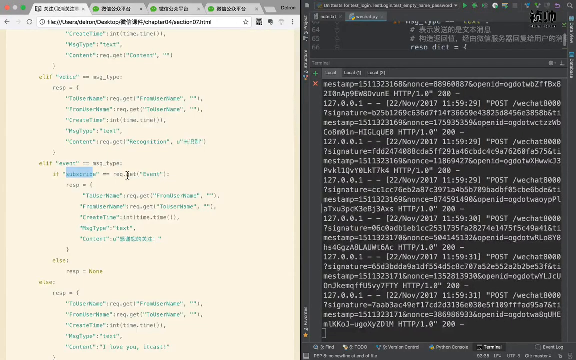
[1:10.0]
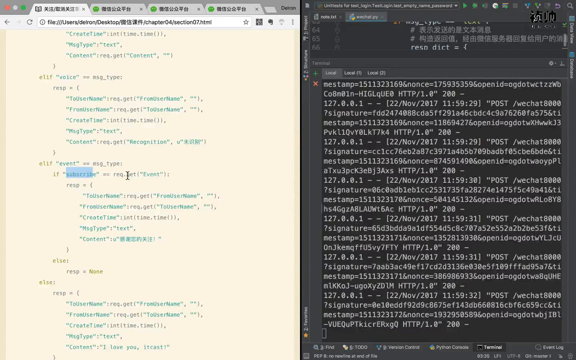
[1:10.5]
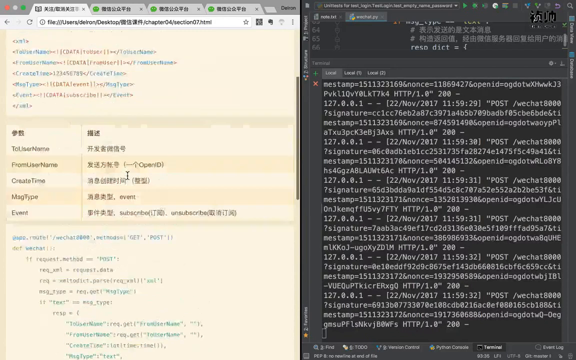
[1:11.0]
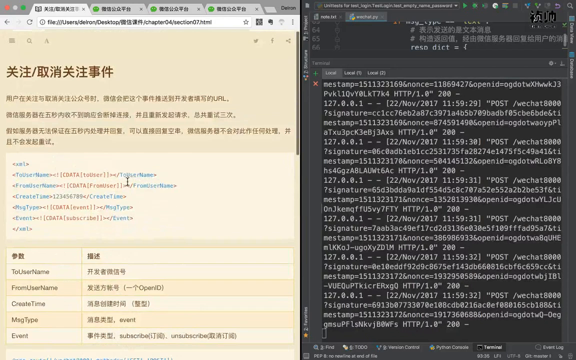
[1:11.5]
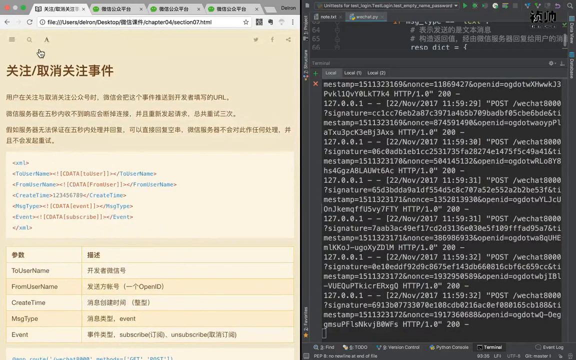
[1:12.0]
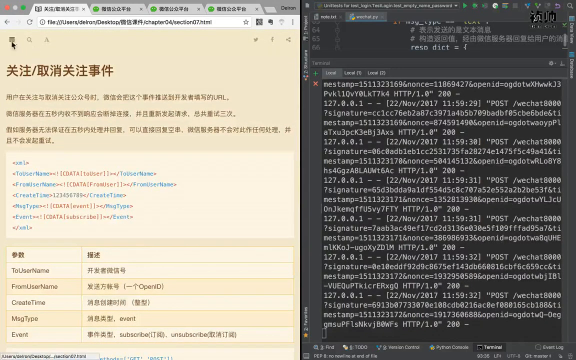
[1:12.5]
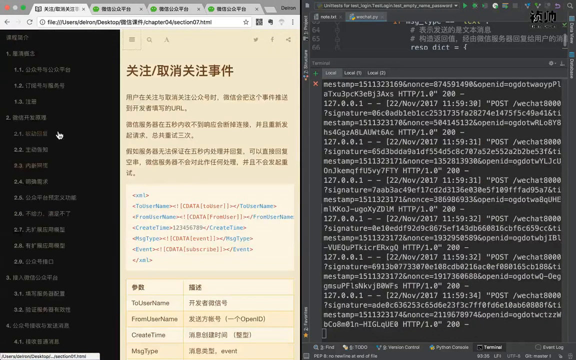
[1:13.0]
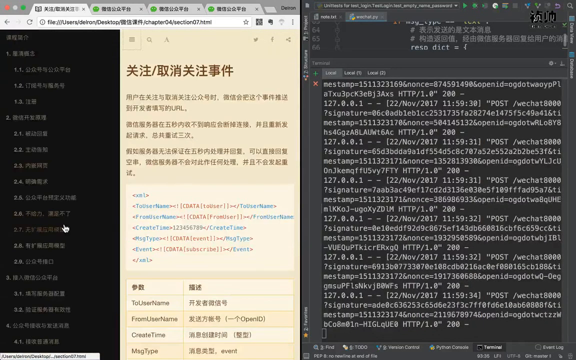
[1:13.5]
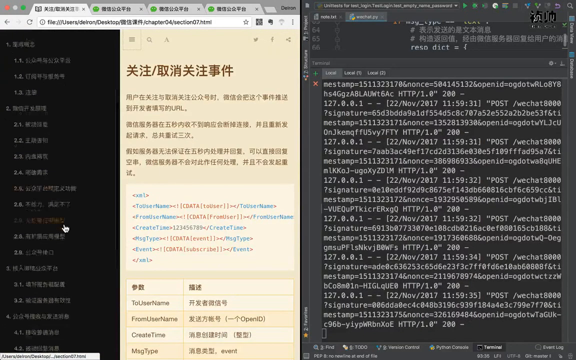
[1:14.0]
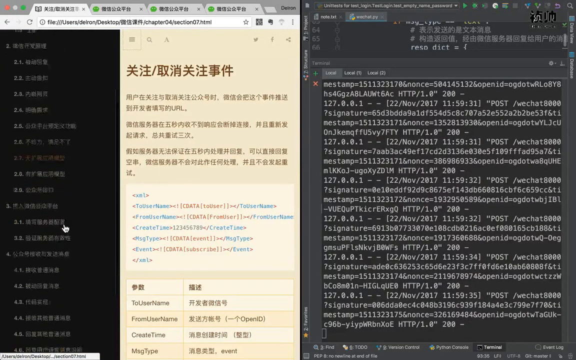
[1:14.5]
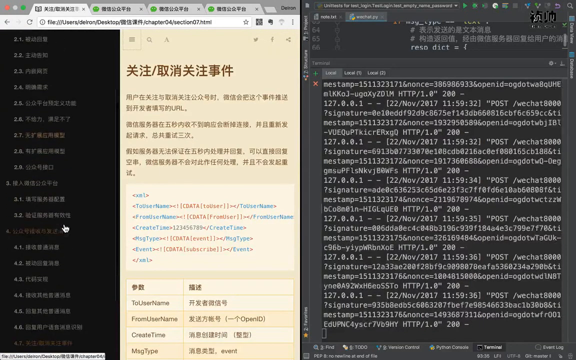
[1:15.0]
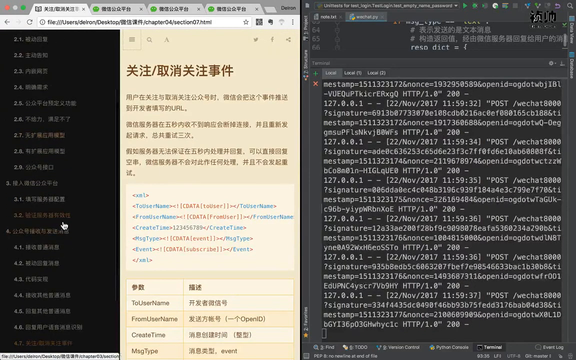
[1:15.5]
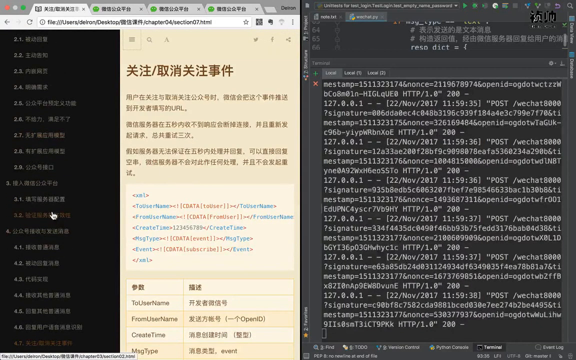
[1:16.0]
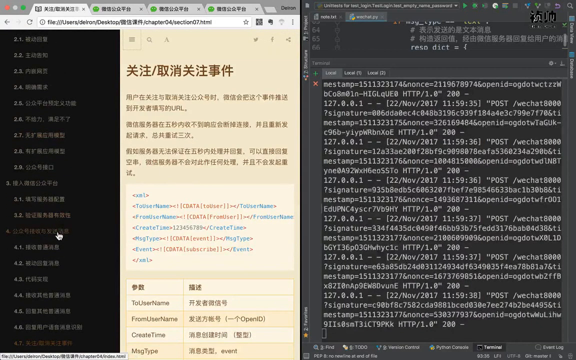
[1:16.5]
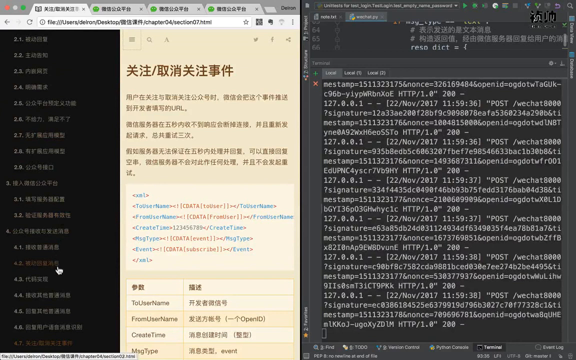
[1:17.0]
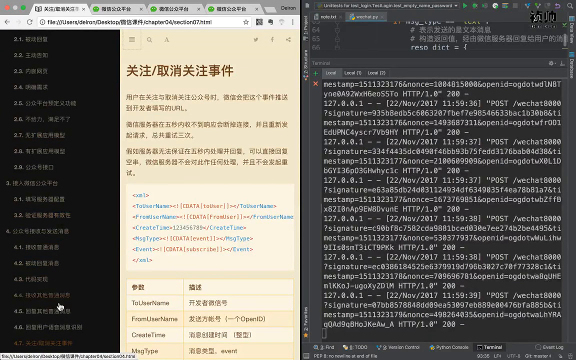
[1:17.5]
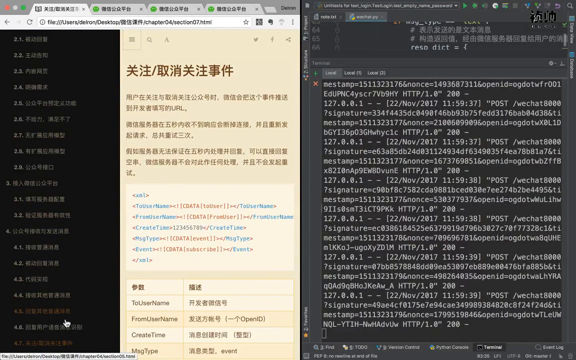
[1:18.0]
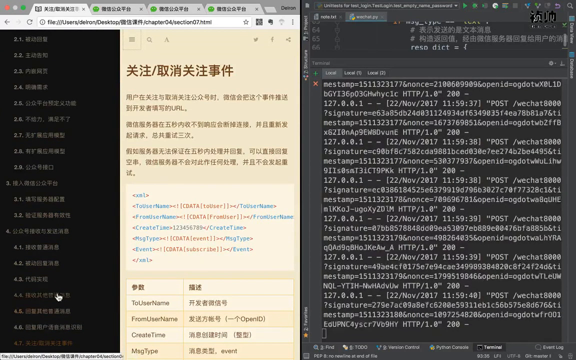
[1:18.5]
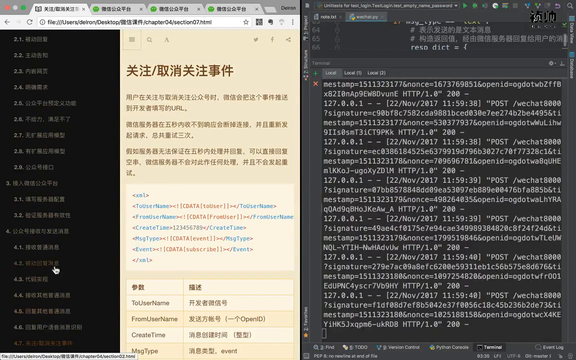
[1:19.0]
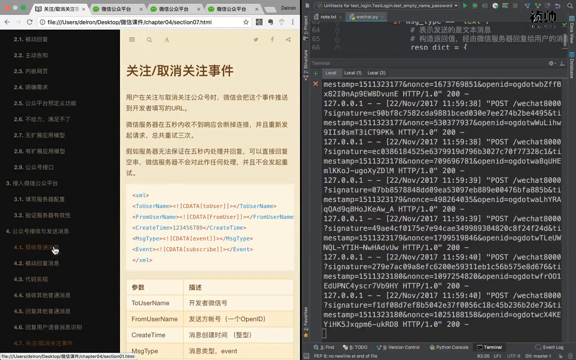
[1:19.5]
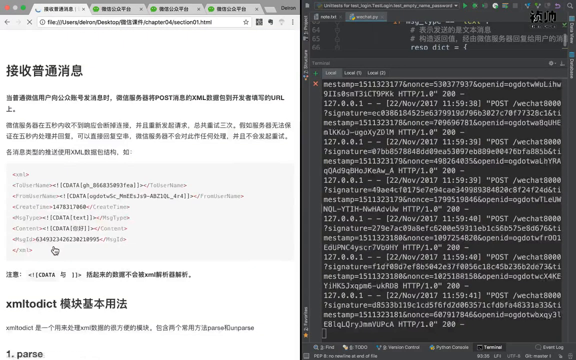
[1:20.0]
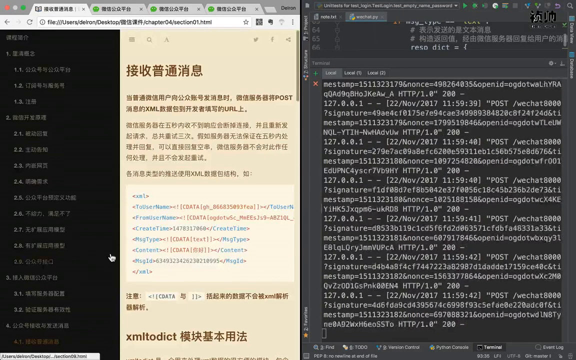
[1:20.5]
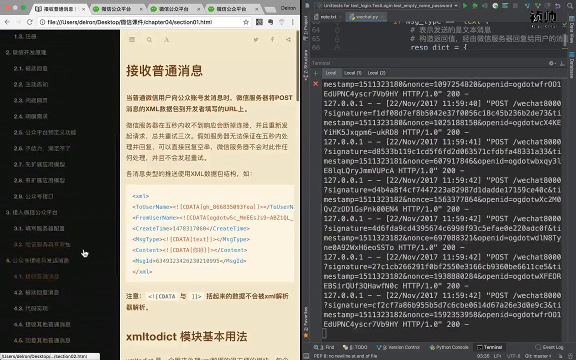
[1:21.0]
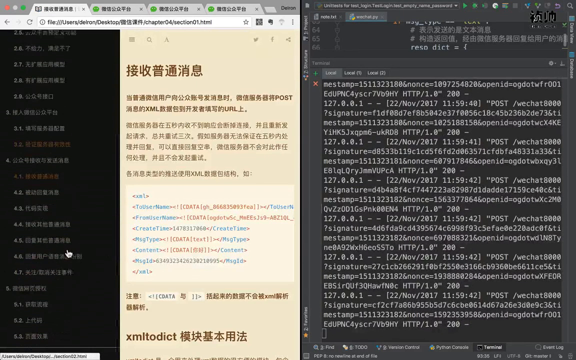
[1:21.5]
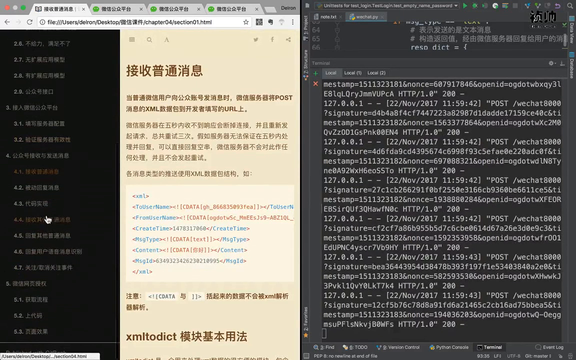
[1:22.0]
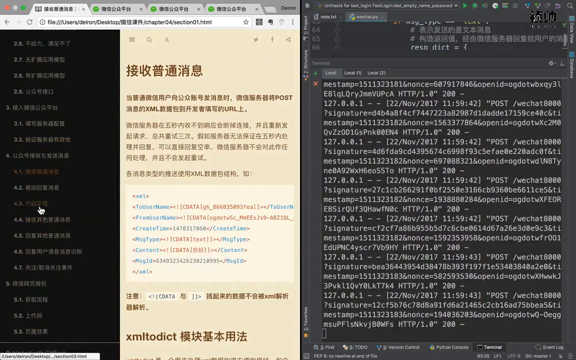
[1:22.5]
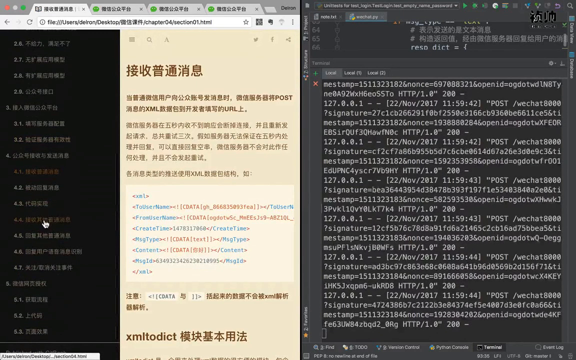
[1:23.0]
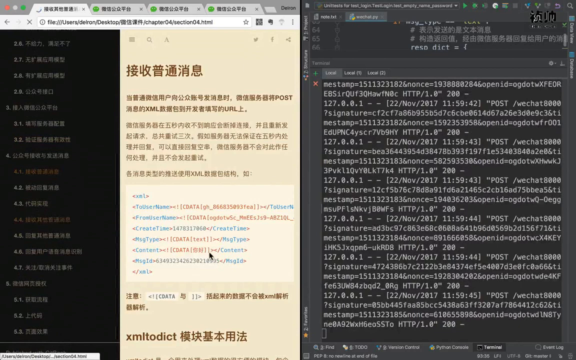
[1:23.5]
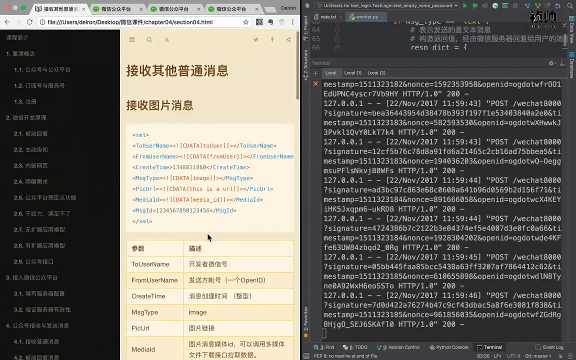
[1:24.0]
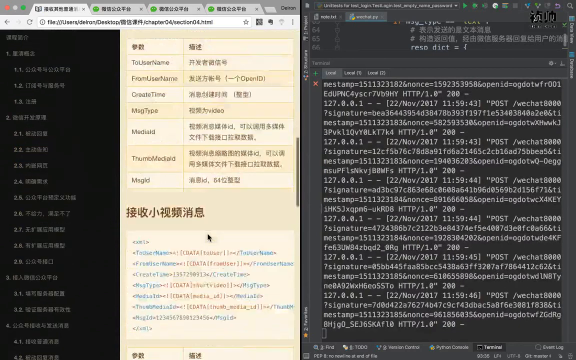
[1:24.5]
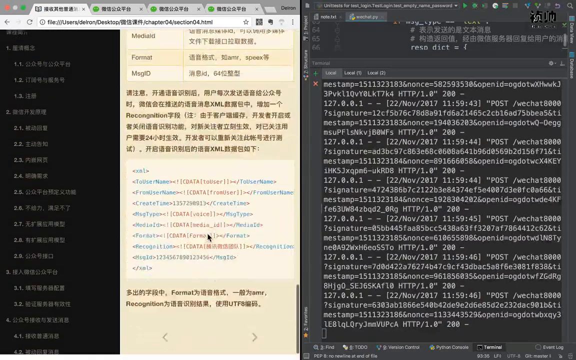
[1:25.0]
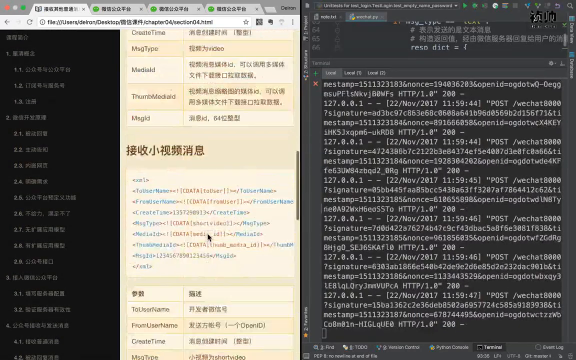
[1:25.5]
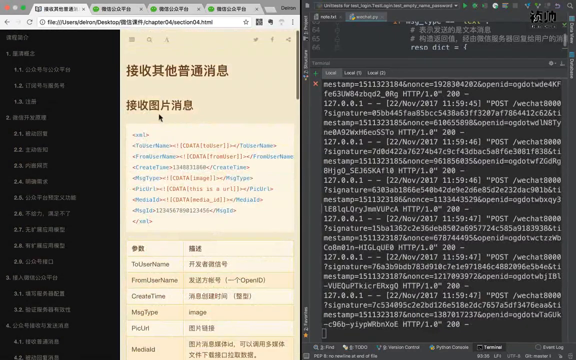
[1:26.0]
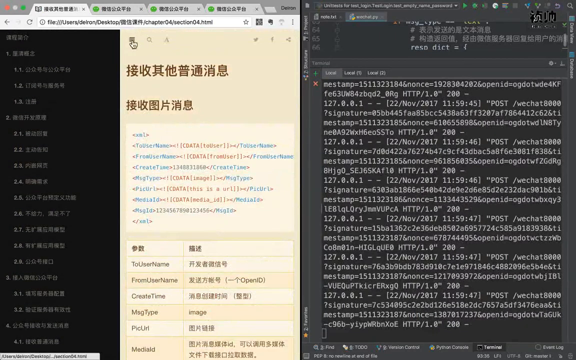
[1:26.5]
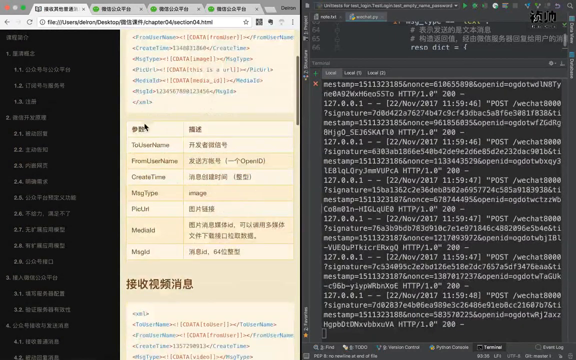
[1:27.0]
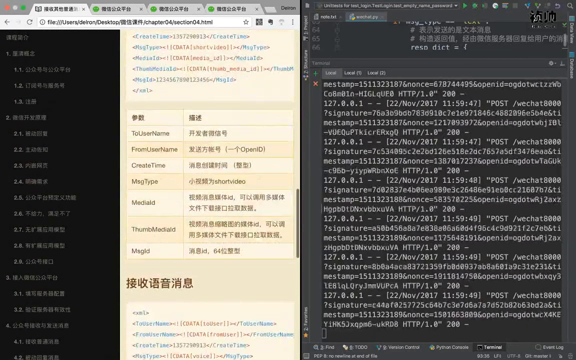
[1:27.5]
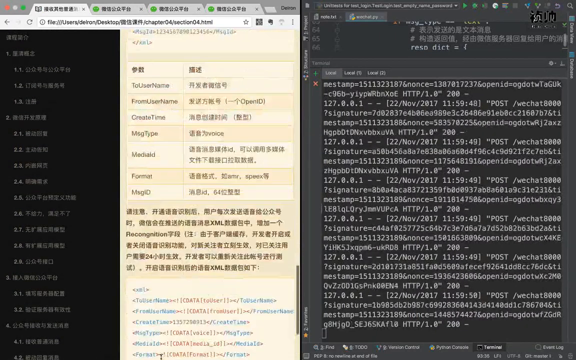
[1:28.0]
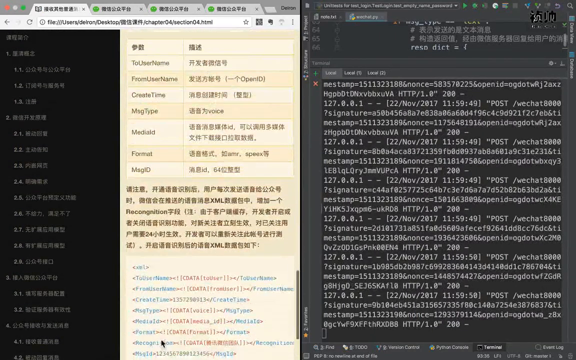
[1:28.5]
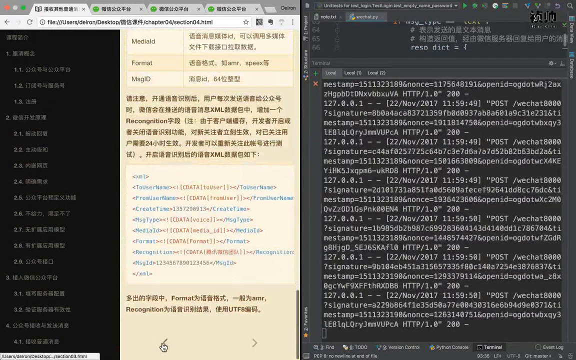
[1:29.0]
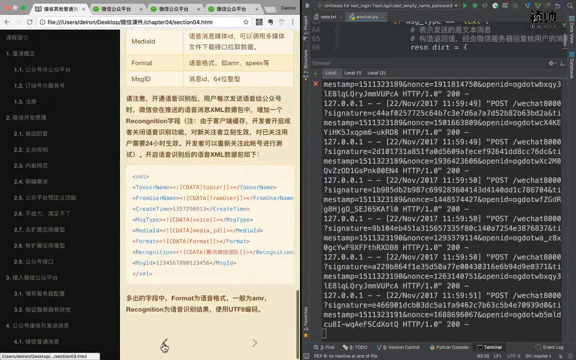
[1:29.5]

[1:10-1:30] The code on the right keeps printing out more lines every millisecond. After he has clicked on the first tab, there is more activity on the left side. He clicks on the home tab or hamburger symbol at the top left of the page, then scrolls down to the 14th option. He scrolls down through a list of labeled dropdown options, each with a name preceded by a number on the left, such as 2.5, 2.6 and 2.7 up to 2.9, then starting over like chapters with 3, 3.1, 3.2. He hovers over chapter 4 and clicks on 4.3, and the screen seems to change a bit.